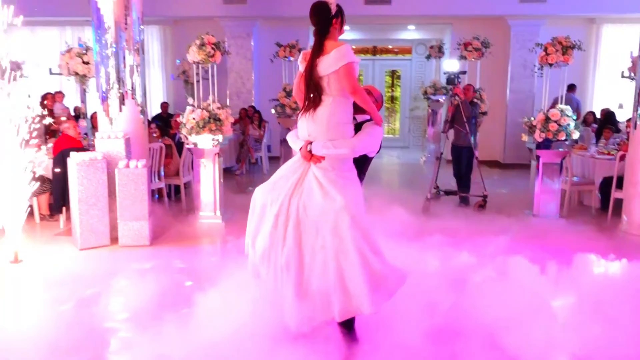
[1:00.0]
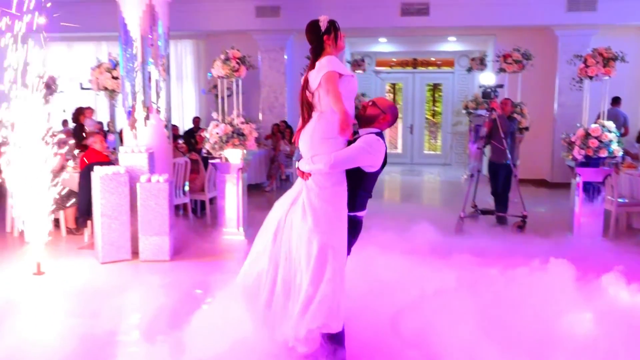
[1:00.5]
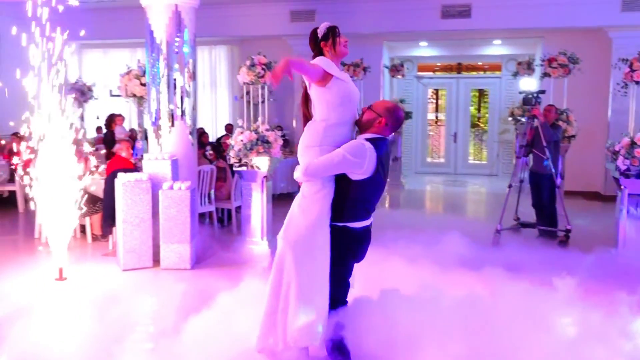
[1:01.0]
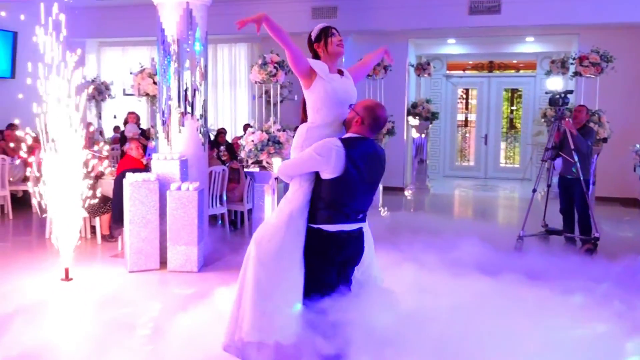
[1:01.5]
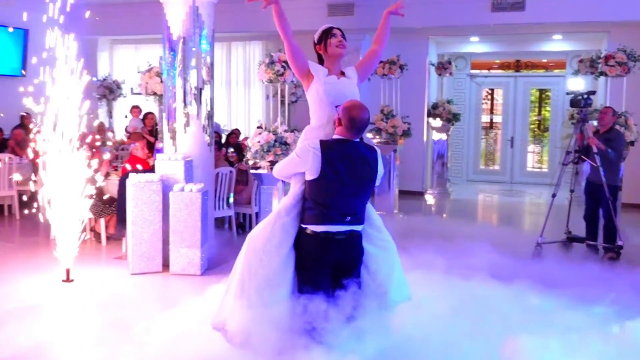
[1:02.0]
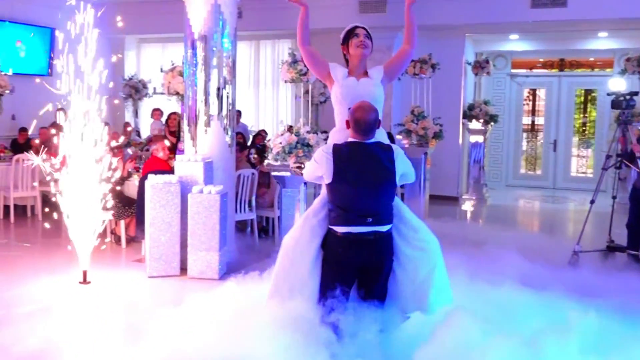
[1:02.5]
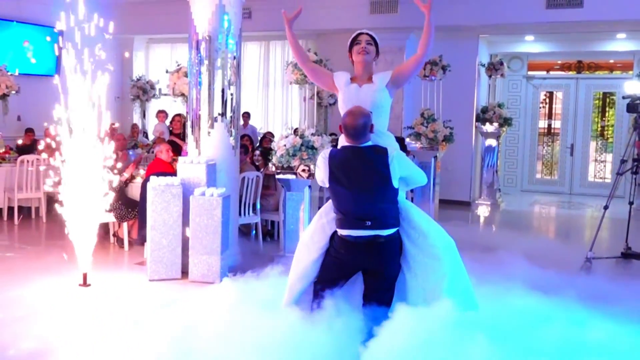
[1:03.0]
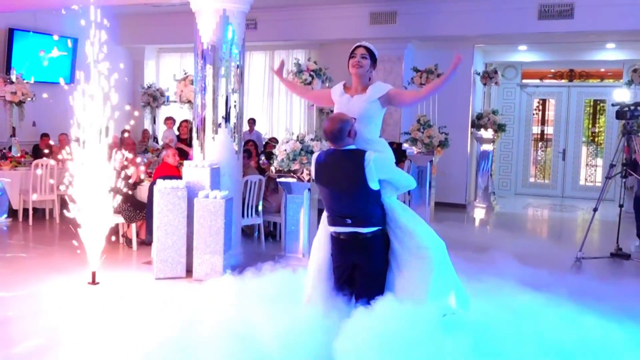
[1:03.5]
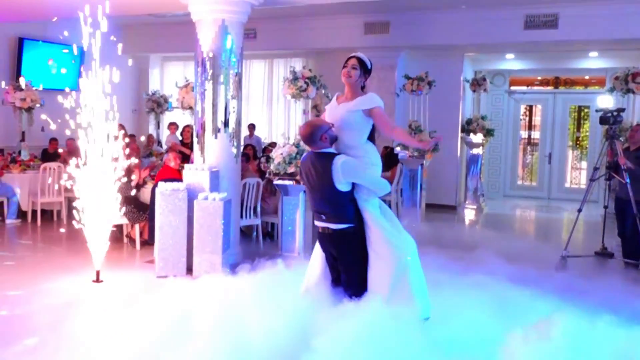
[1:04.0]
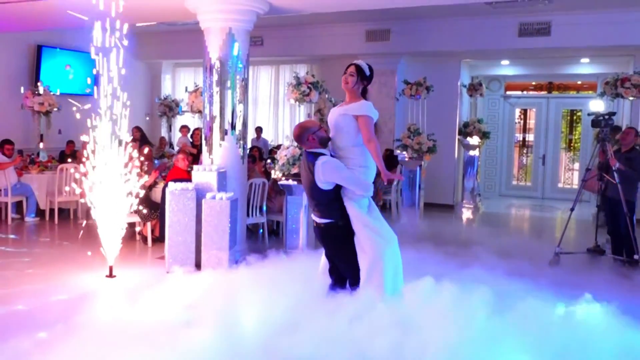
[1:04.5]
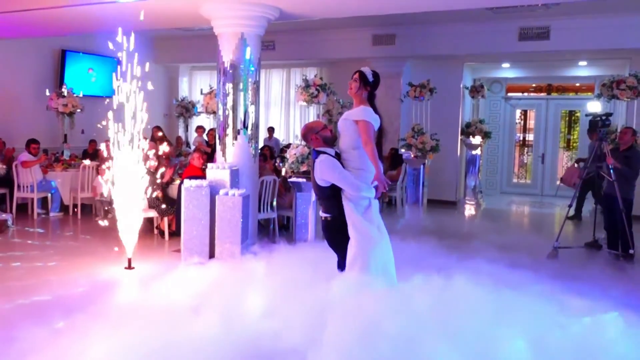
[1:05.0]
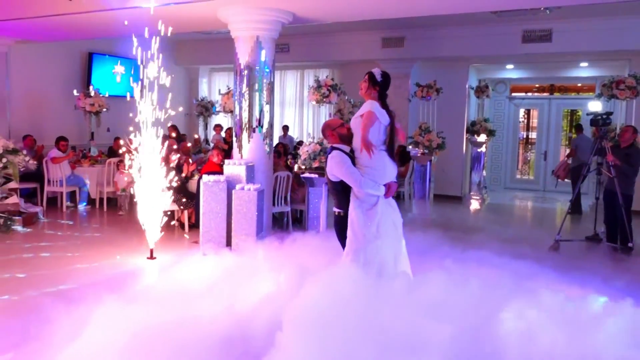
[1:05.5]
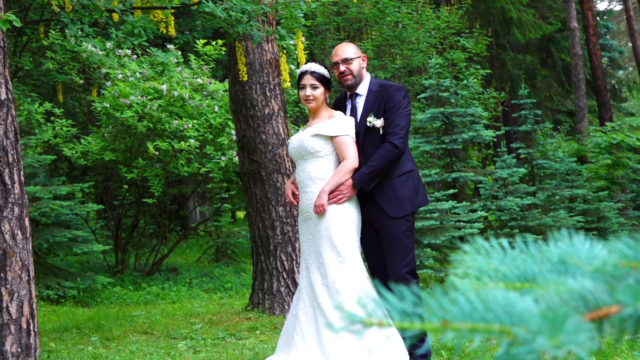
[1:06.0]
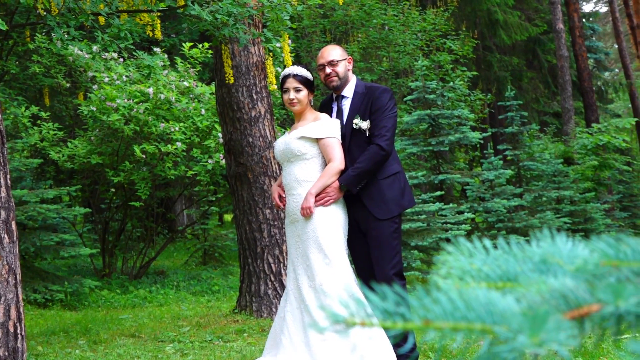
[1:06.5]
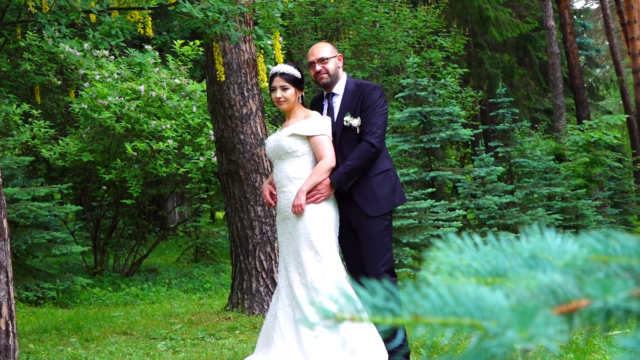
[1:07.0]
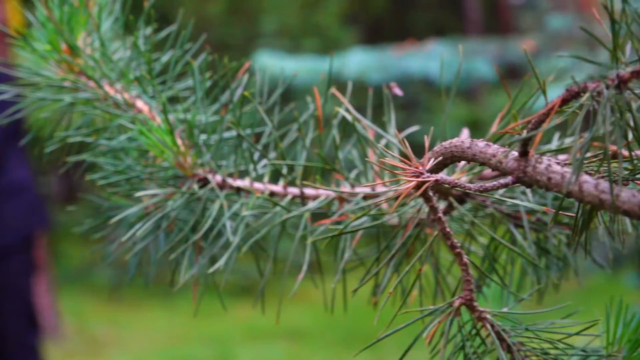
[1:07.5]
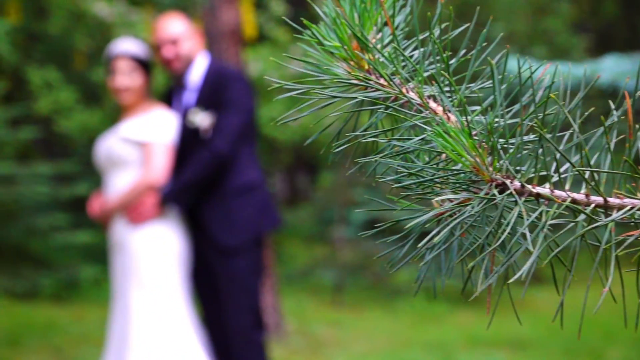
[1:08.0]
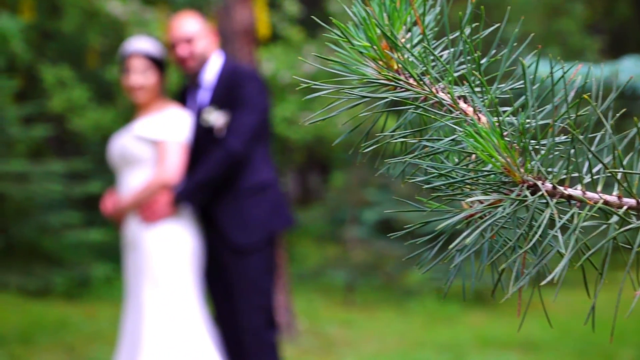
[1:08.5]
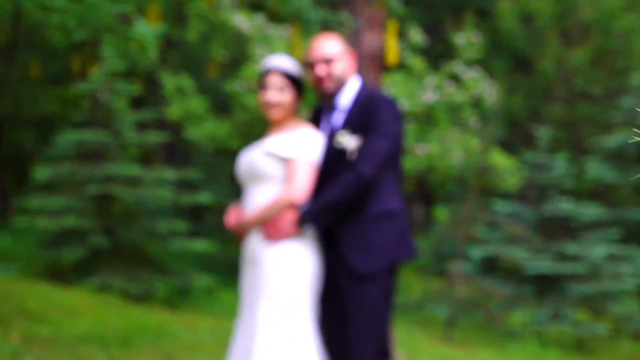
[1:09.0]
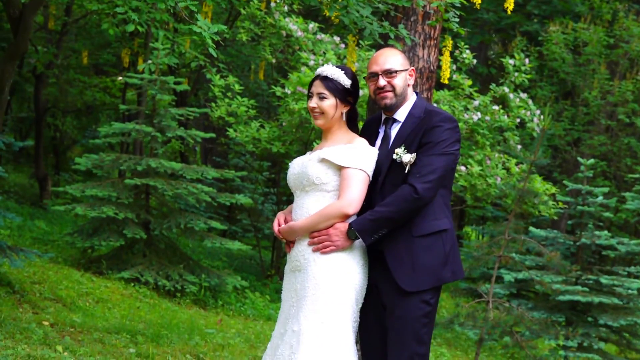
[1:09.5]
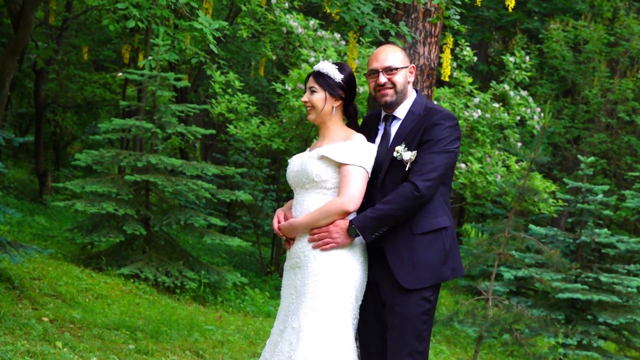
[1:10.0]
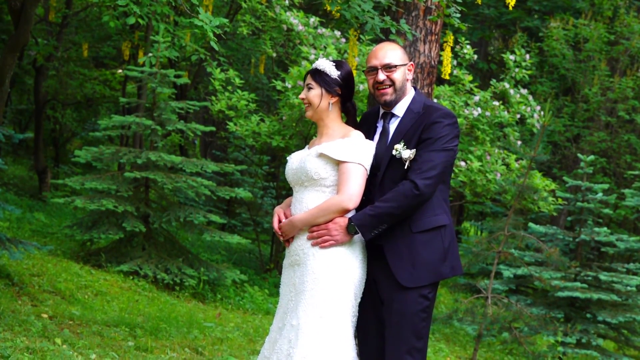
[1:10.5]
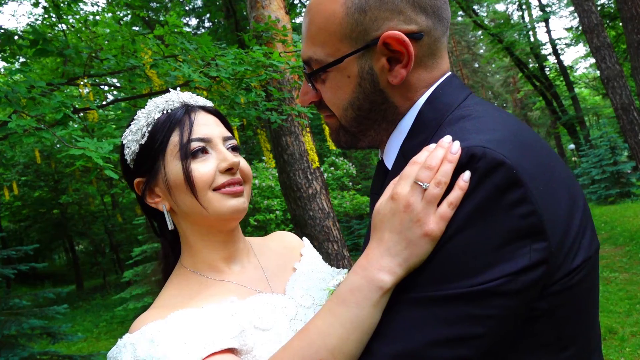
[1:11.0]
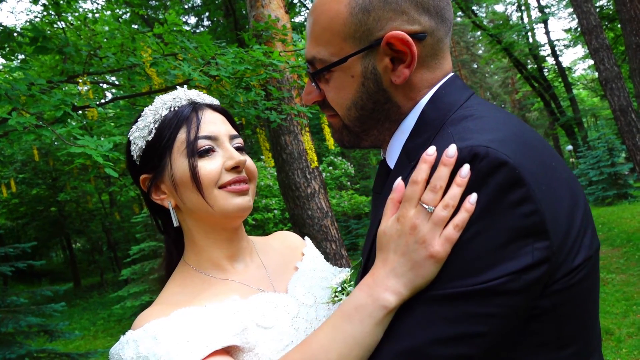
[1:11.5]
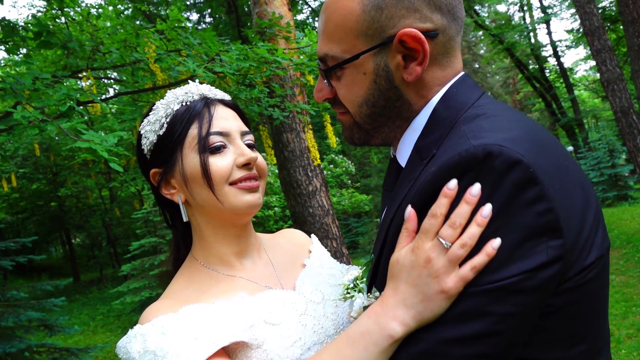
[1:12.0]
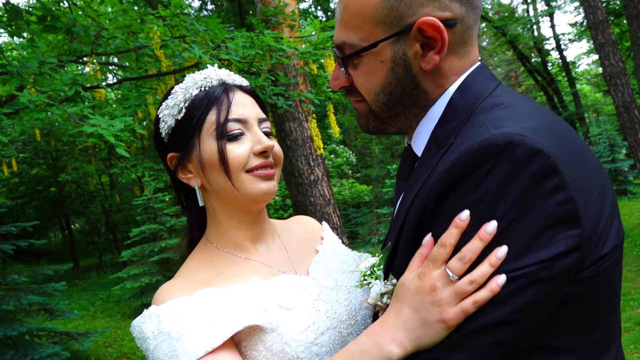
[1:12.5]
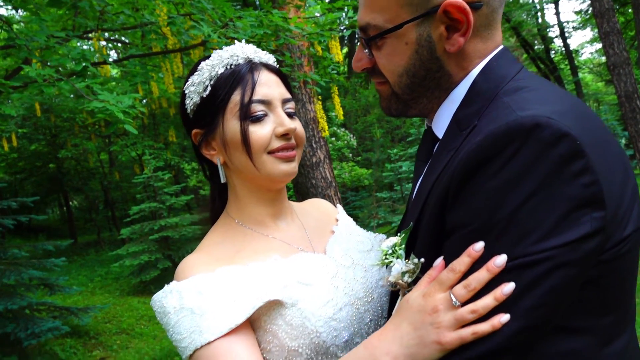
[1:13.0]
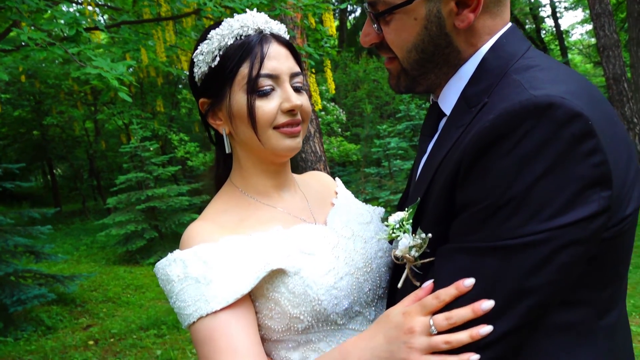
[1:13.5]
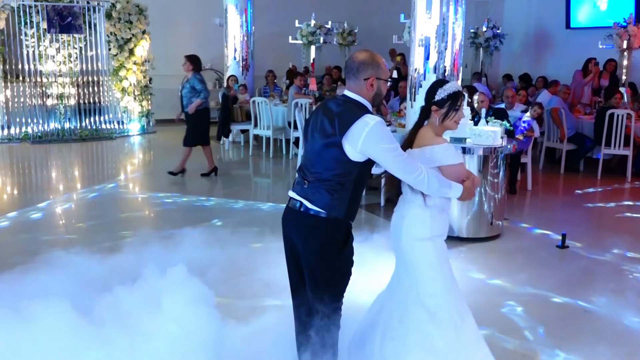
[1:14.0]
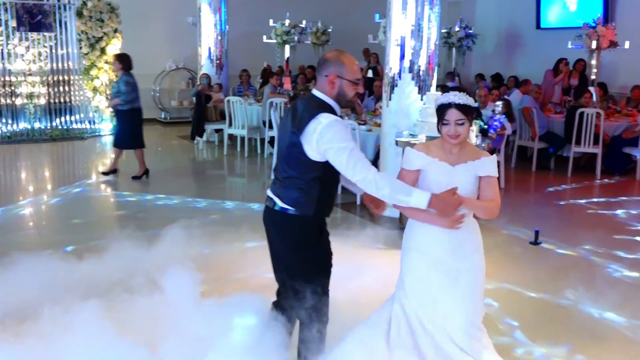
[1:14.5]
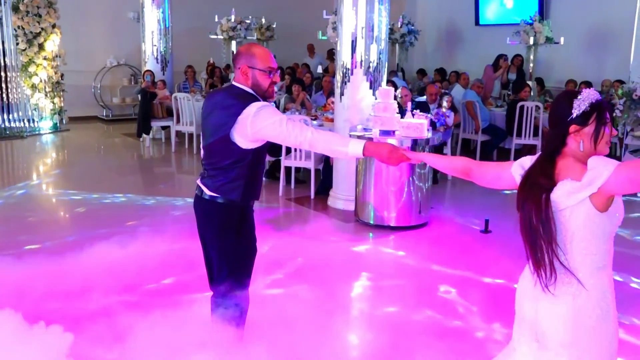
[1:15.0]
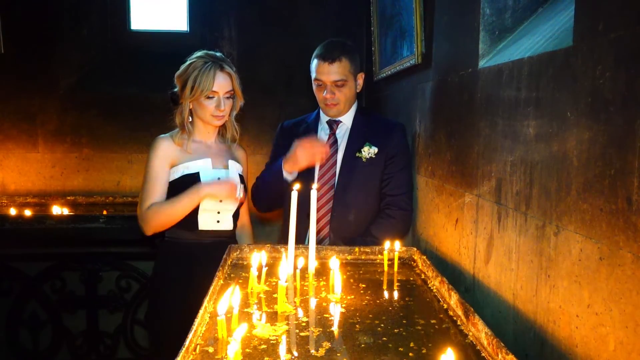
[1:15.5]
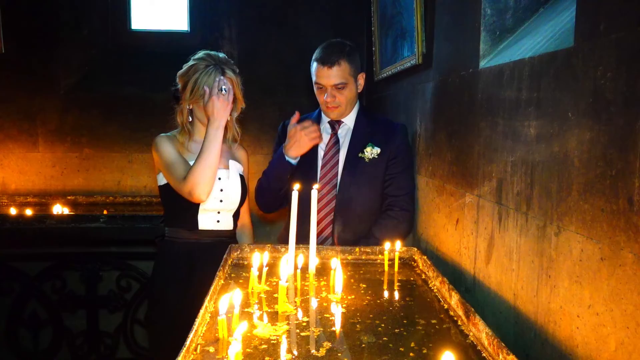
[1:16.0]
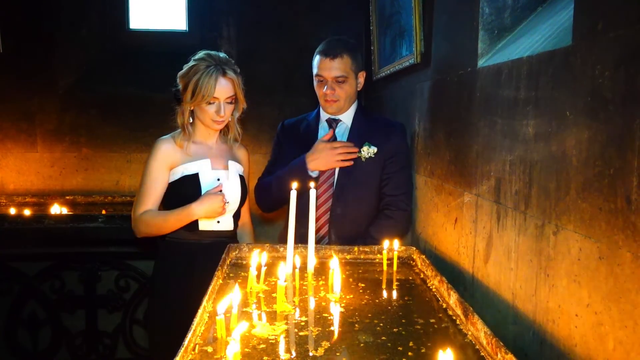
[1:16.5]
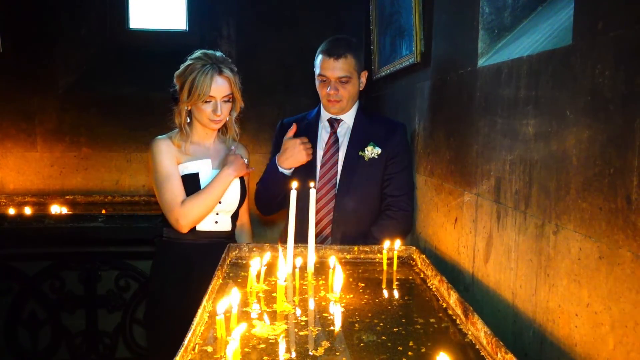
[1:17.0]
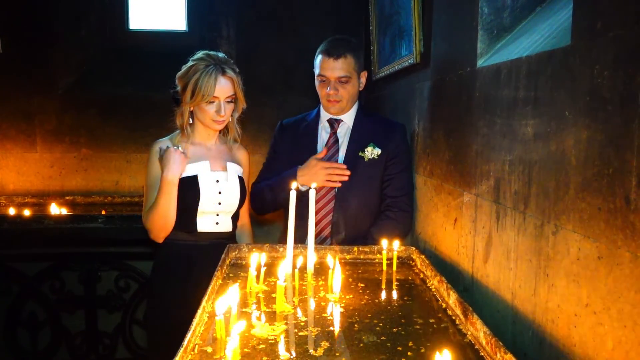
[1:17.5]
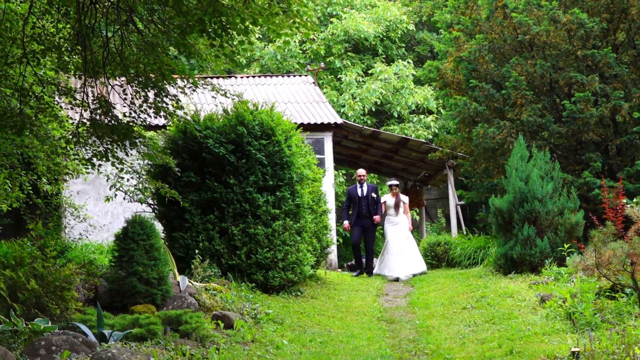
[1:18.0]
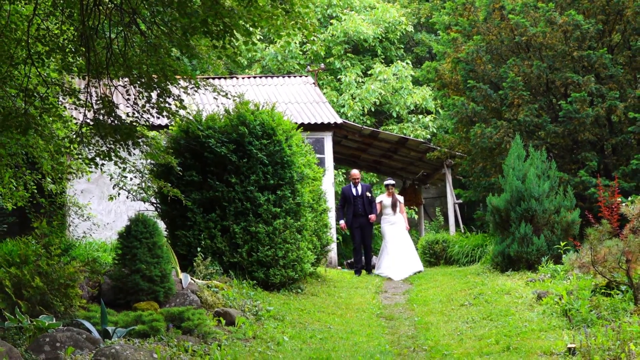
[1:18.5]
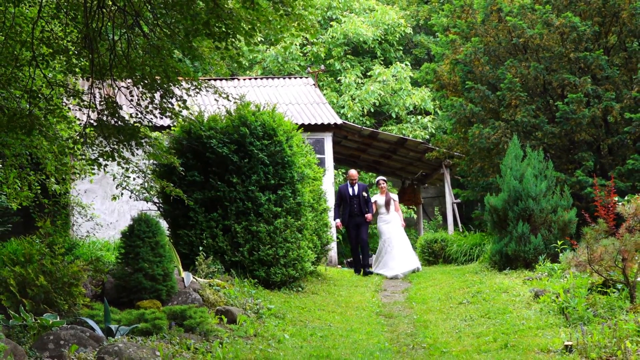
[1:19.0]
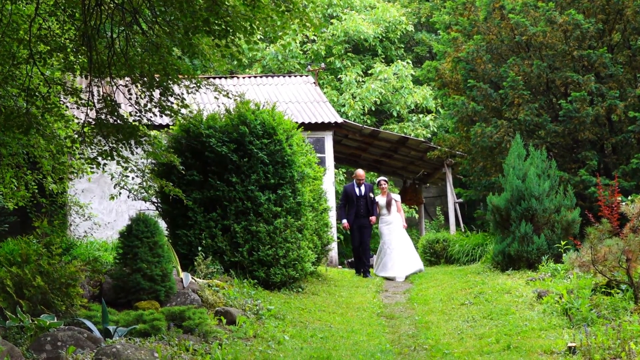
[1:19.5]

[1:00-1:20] The man holds the woman and takes her in his arms, and they dance. They pose for pictures while photographers are present. There are flowers in the hall, and people are sitting and watching them. The couple also take pictures in a natural setting with a lot of green trees and an open field. Later, two people are in front of a lot of candles.